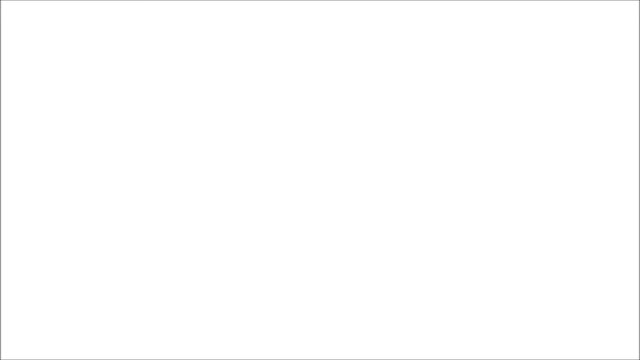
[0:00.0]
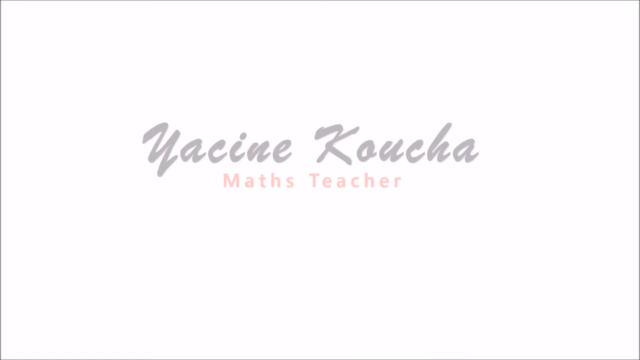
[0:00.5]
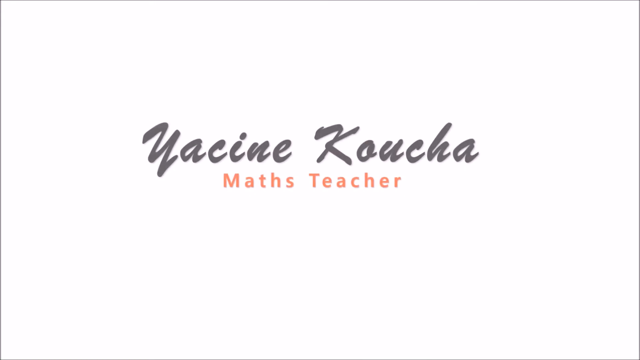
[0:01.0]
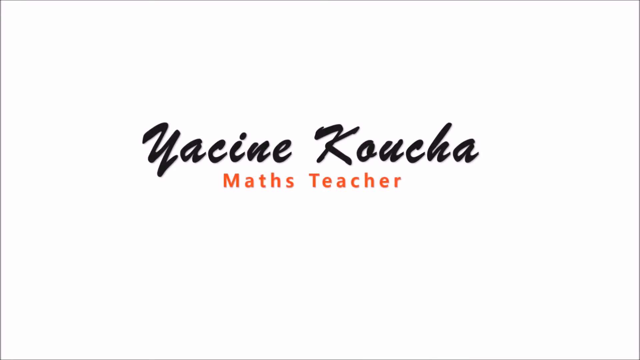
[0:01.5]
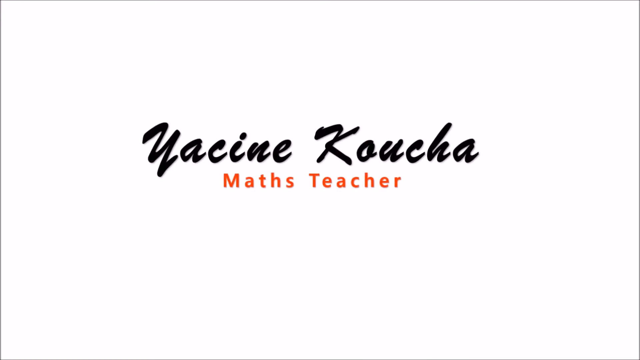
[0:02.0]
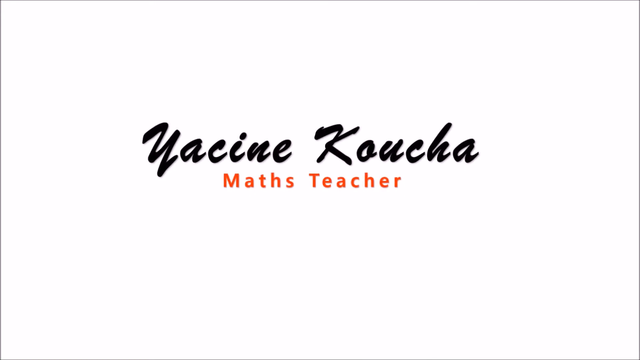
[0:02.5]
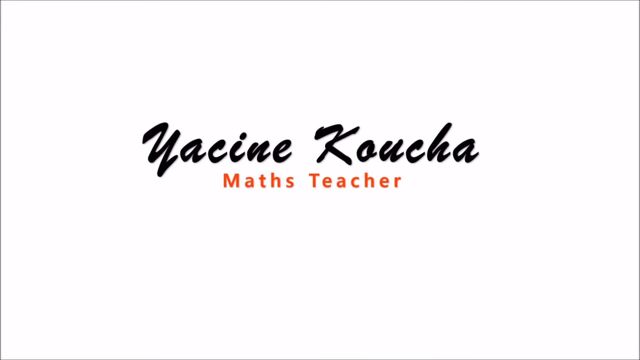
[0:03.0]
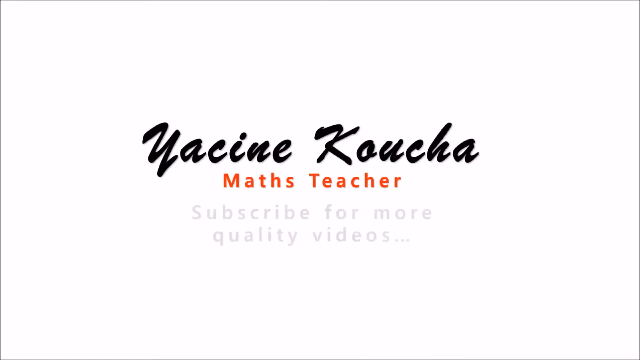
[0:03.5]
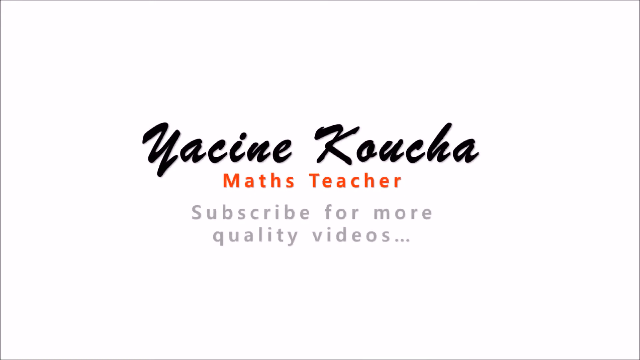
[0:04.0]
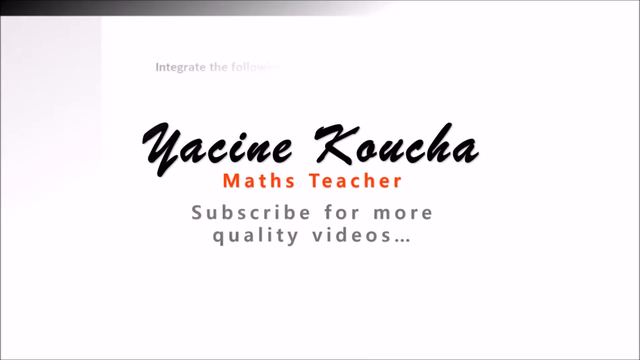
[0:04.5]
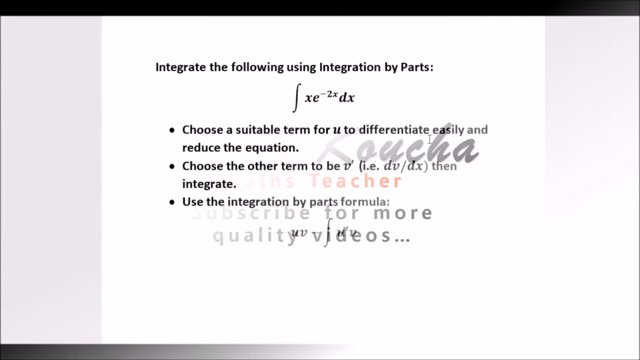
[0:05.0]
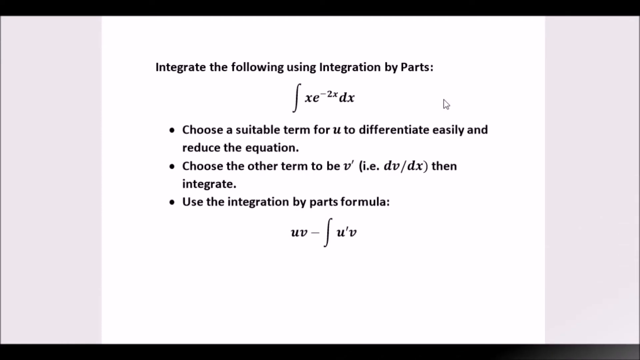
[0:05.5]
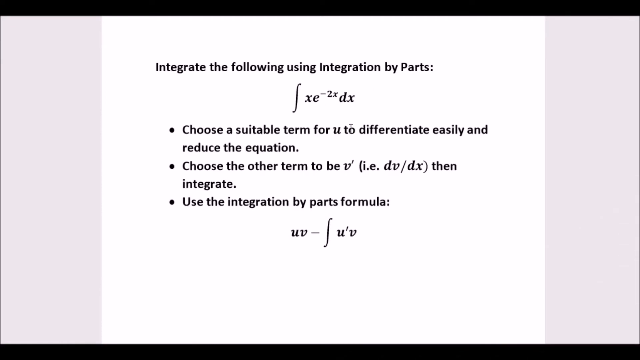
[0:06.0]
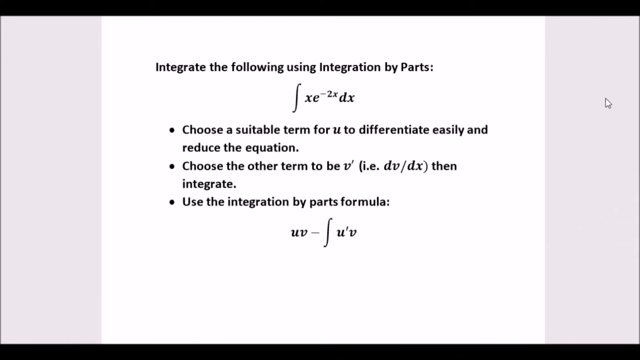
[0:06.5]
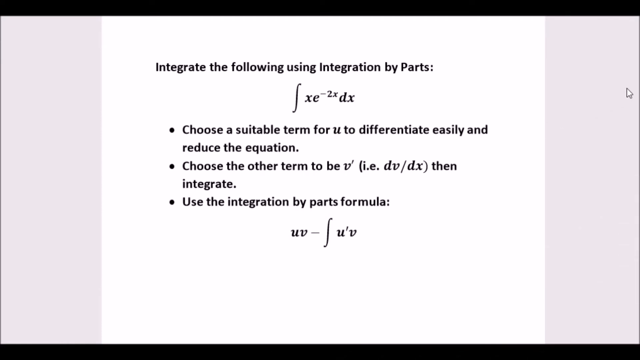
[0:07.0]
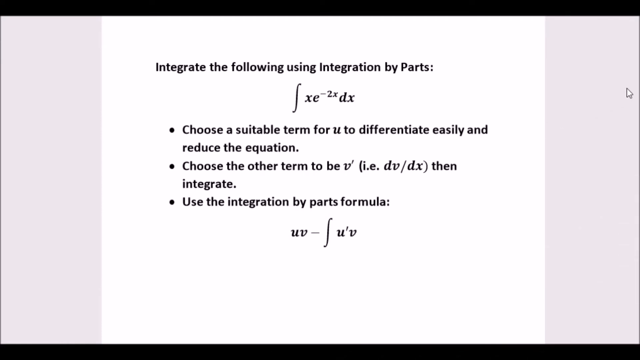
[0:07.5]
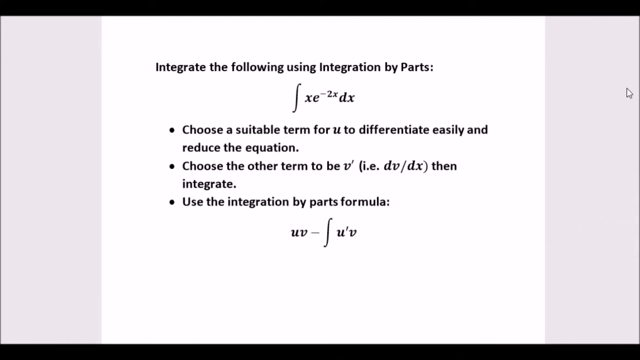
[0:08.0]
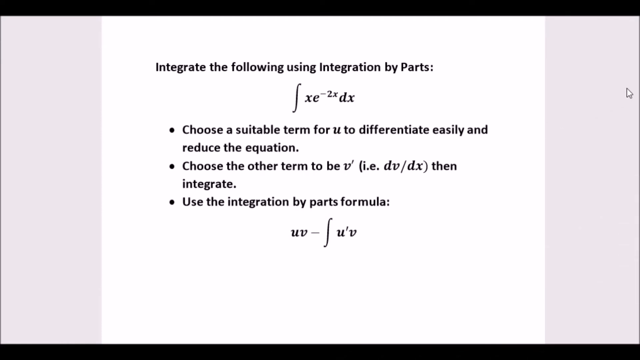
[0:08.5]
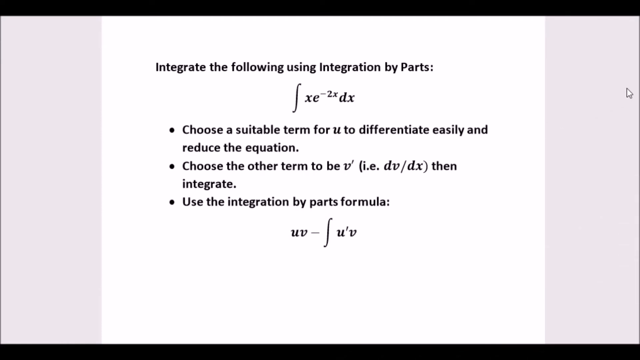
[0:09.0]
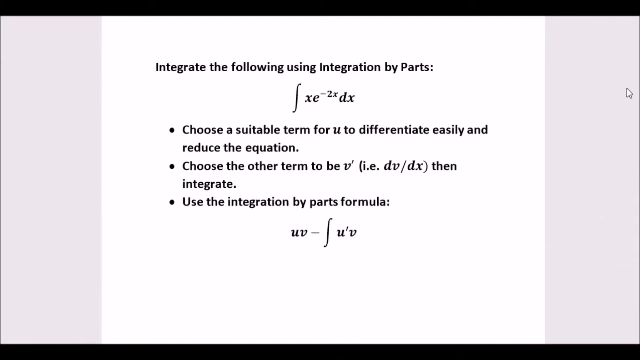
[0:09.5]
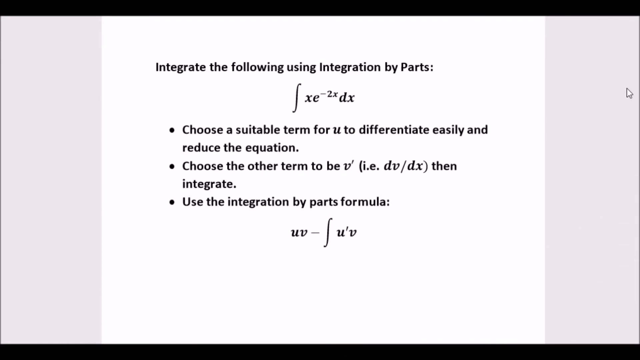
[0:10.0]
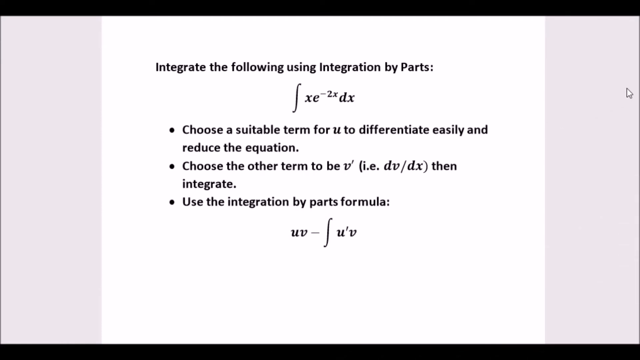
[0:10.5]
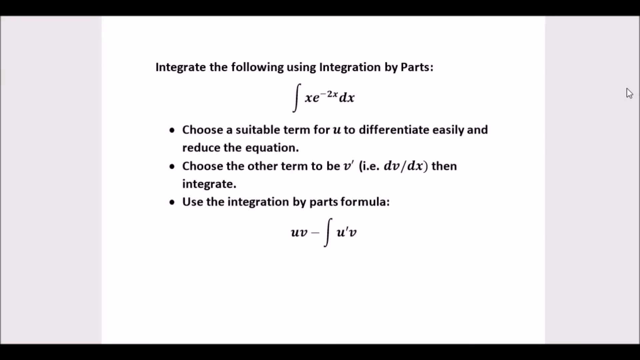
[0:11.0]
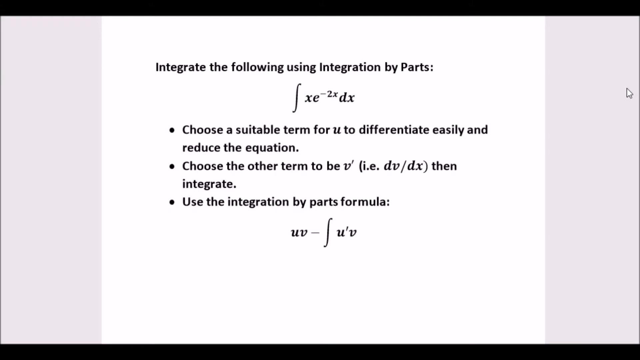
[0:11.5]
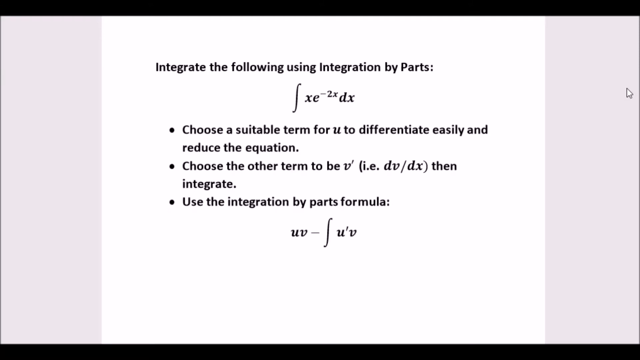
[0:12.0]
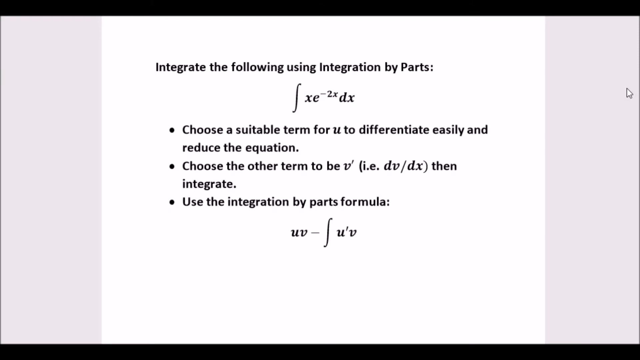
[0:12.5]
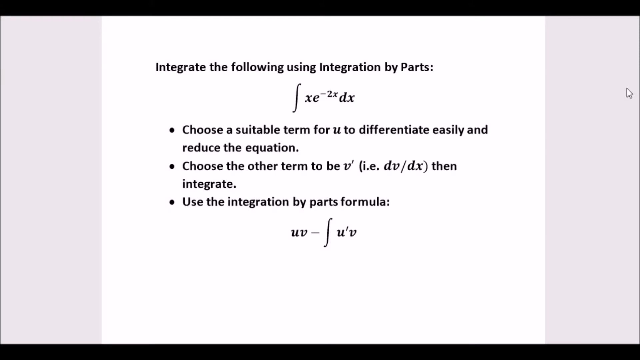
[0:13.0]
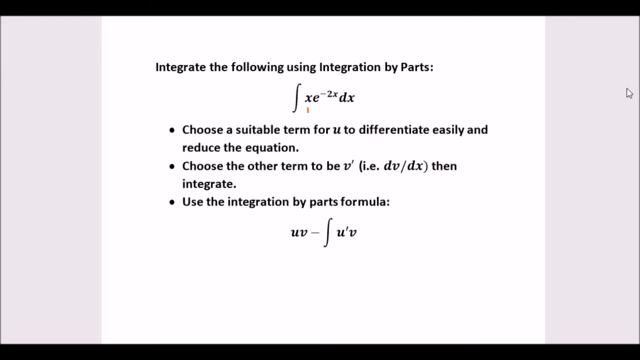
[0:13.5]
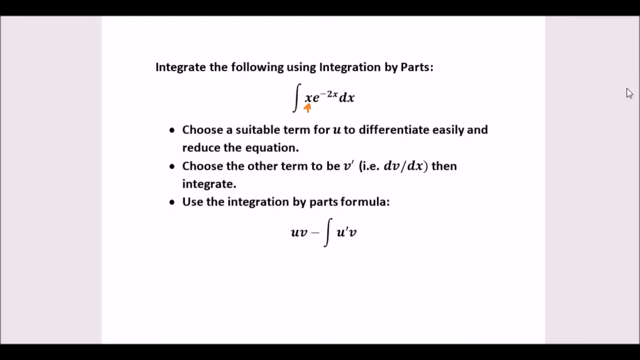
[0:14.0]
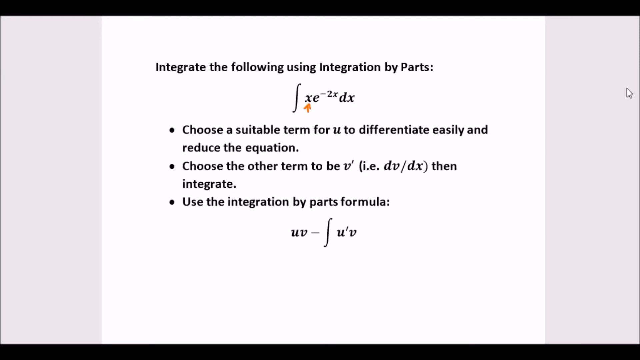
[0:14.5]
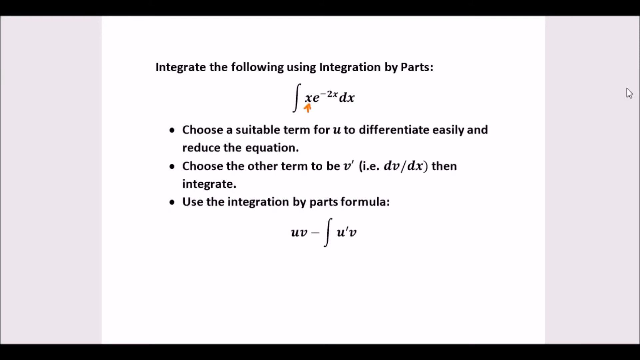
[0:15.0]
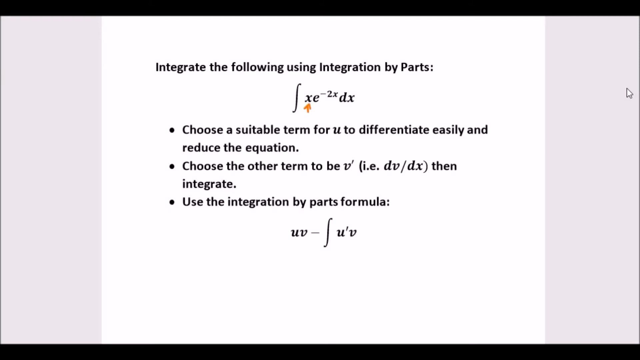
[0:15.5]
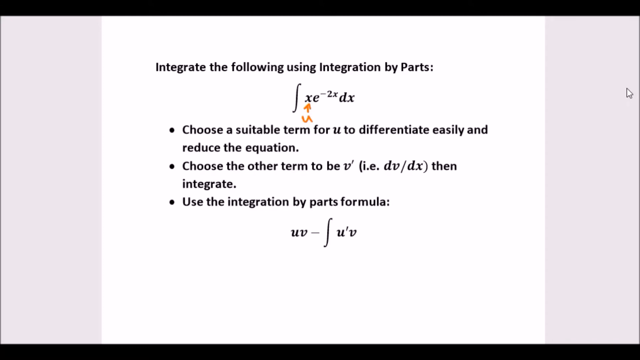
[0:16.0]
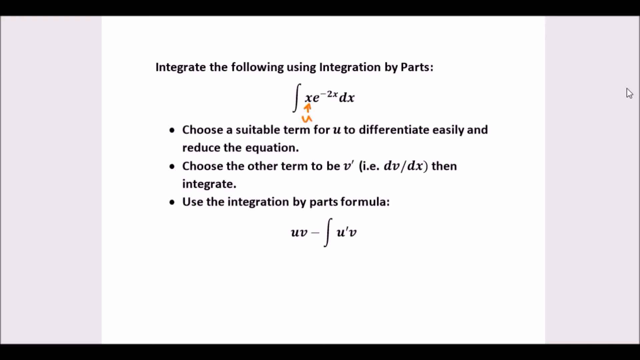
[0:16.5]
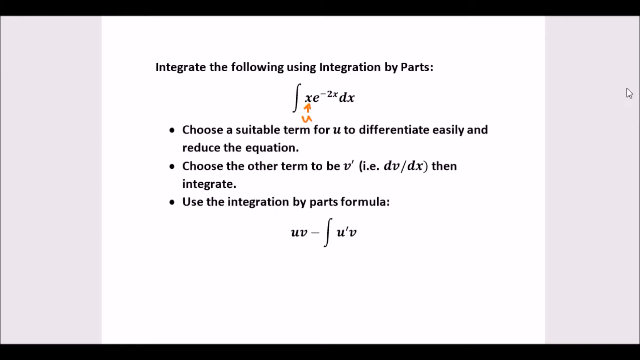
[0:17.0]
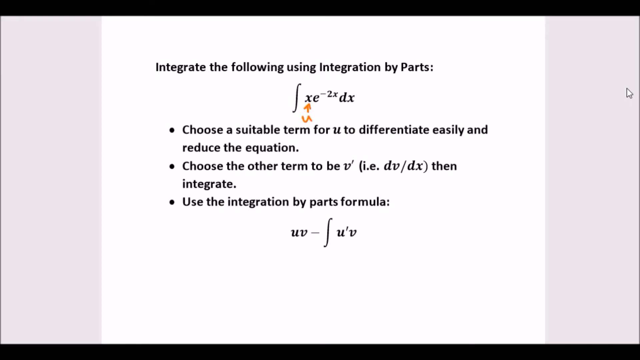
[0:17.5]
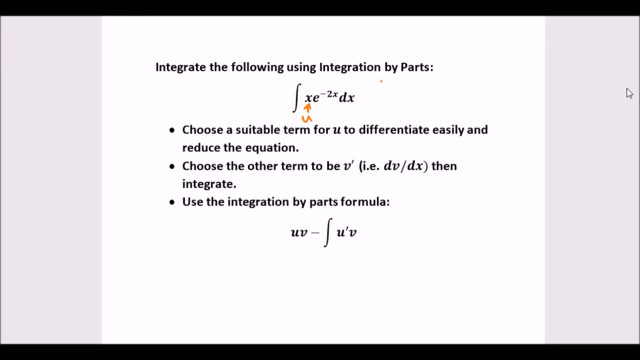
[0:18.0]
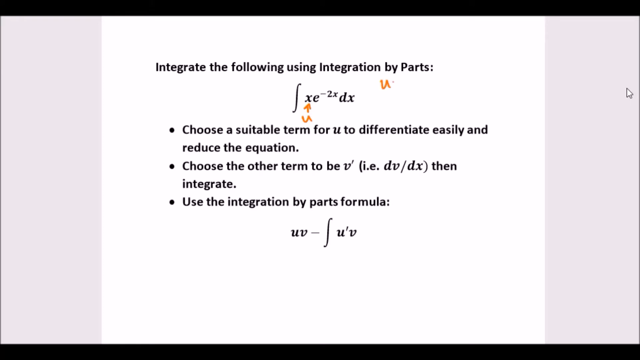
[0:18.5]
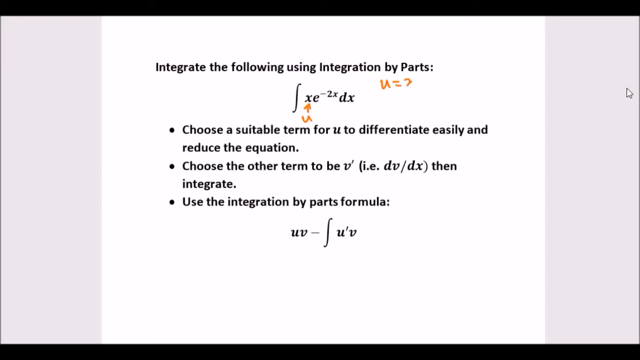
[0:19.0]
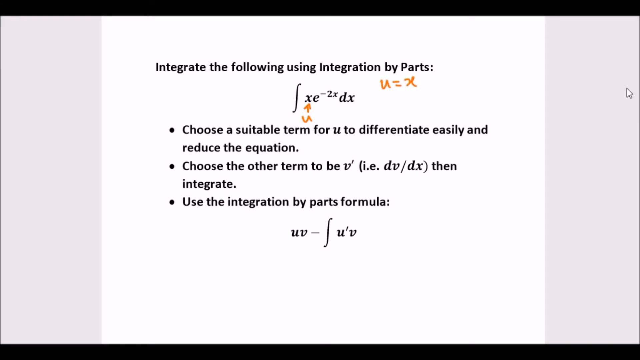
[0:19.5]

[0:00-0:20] A title on a blank background reads "Yacine Koucha Maths Teacher Subscribe for more quality videos," introducing a video by a math teacher named Yacine Koucha. The video then changes to a very simple presentation slide with a blank background and black text containing two algebraic formulas. The slide says "Integrate the following using integration by parts," followed by an integral and a series of steps: "Choose a suitable term for u to differentiate easily and reduce the equation," "Choose the other term to be v then integrate," and "Use the integration by parts formula." The slide stays unchanged for a while. Then the user draws around the first equation, writing a 'u' under the 'x' and then 'u = x' to the side.